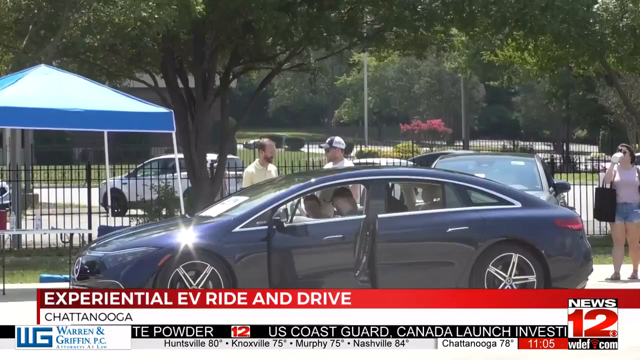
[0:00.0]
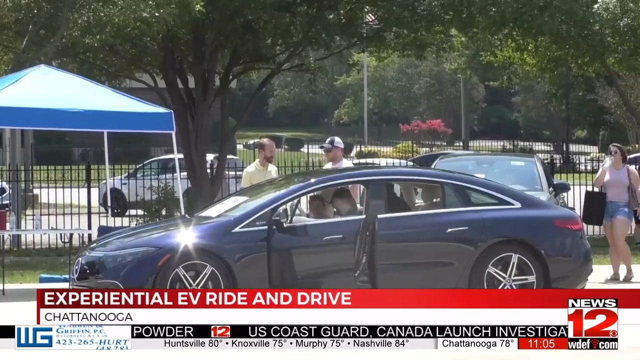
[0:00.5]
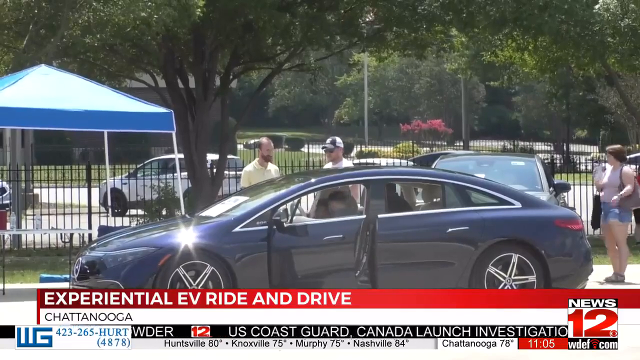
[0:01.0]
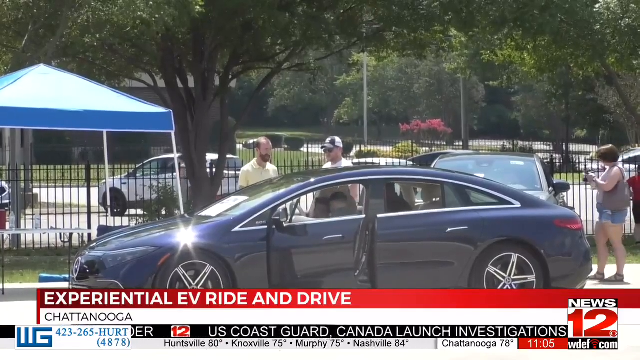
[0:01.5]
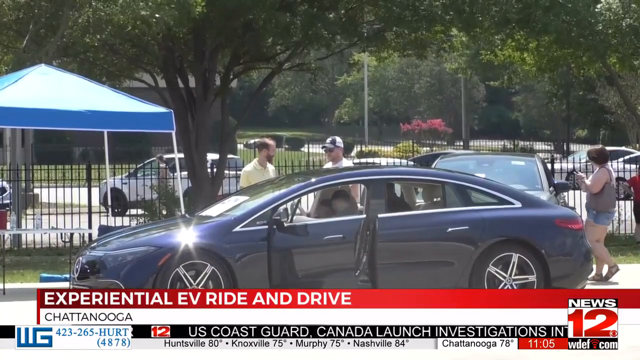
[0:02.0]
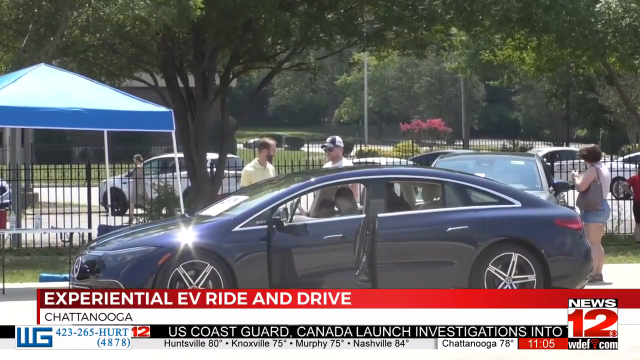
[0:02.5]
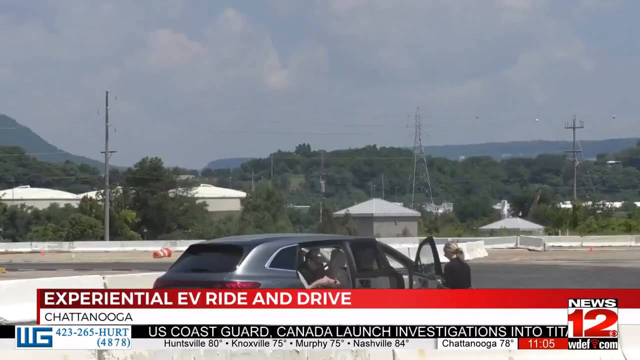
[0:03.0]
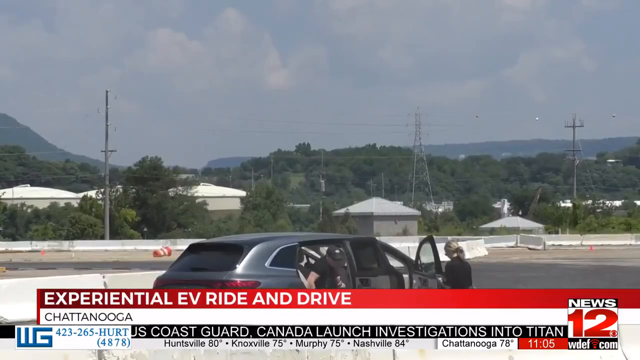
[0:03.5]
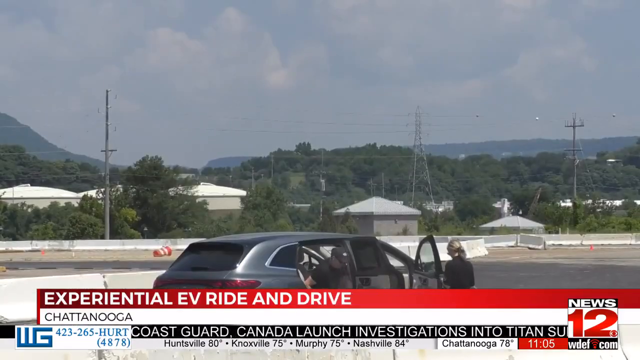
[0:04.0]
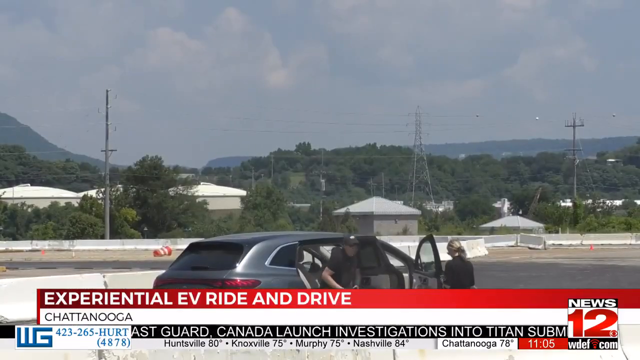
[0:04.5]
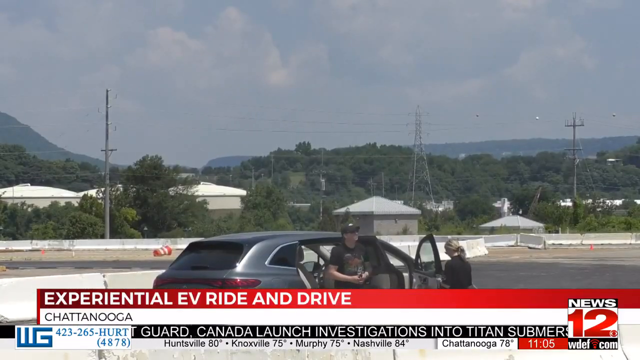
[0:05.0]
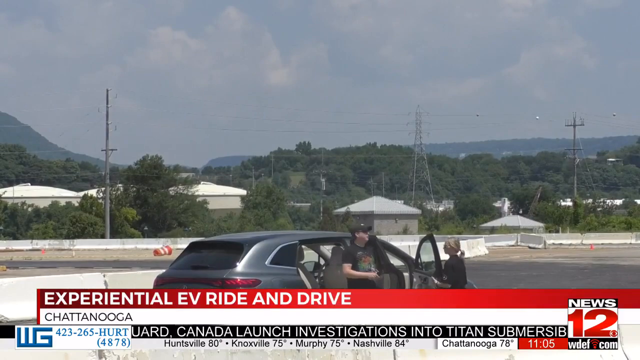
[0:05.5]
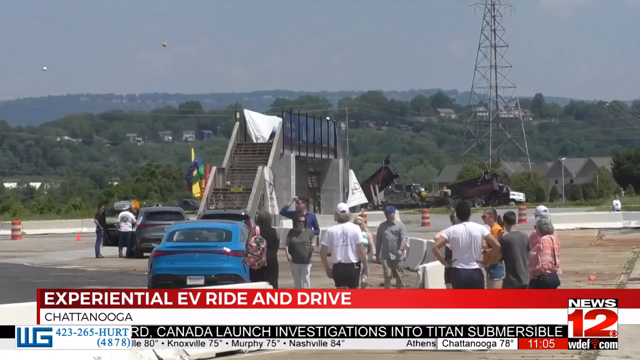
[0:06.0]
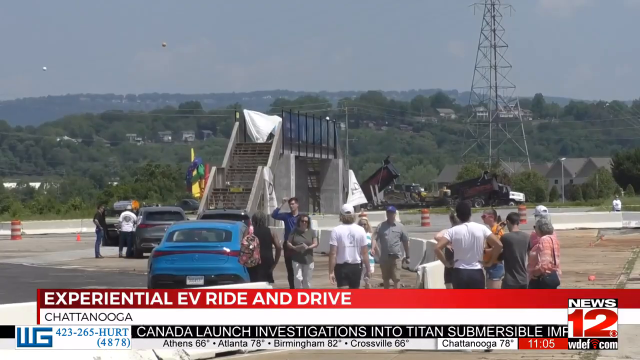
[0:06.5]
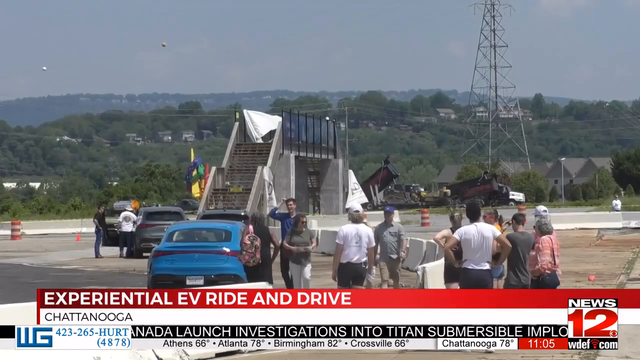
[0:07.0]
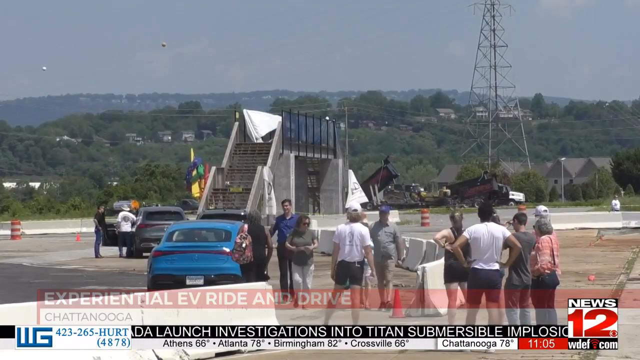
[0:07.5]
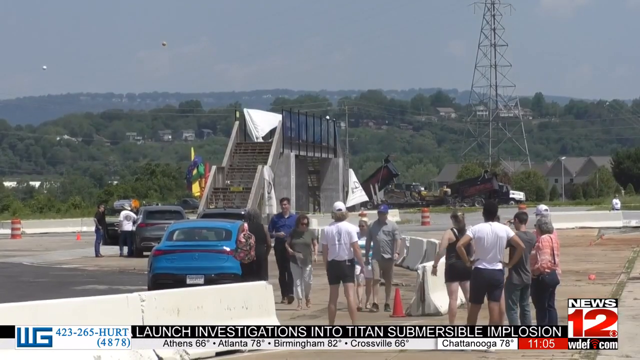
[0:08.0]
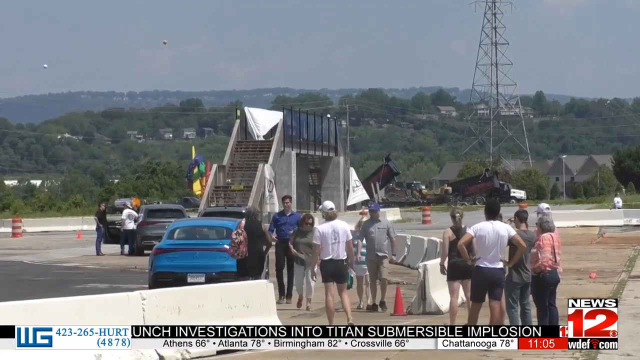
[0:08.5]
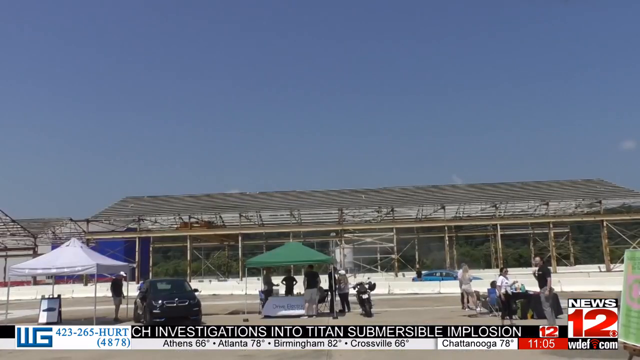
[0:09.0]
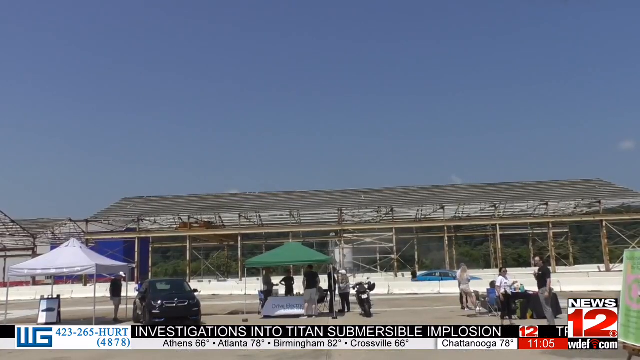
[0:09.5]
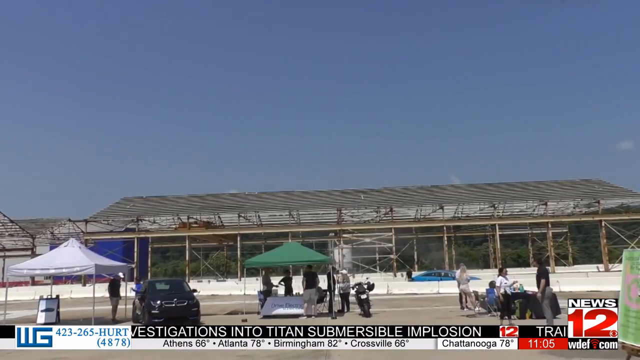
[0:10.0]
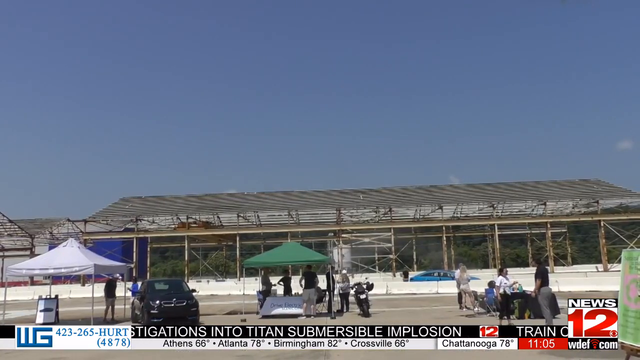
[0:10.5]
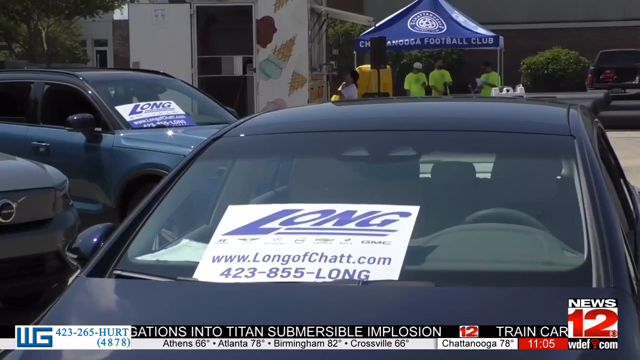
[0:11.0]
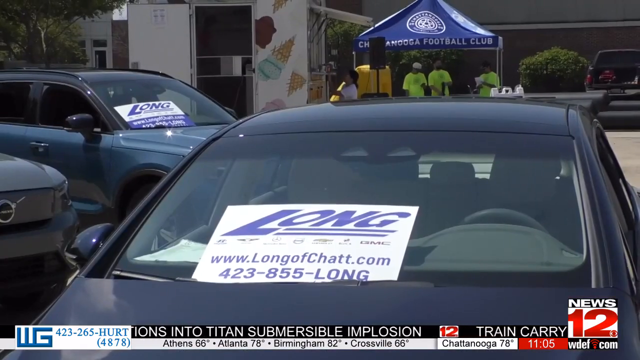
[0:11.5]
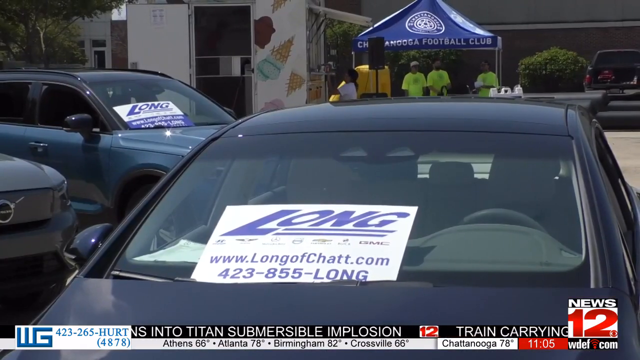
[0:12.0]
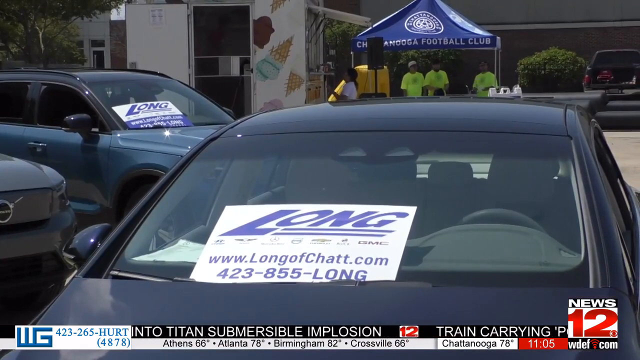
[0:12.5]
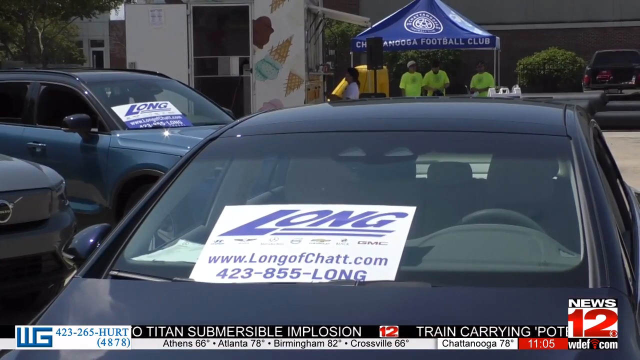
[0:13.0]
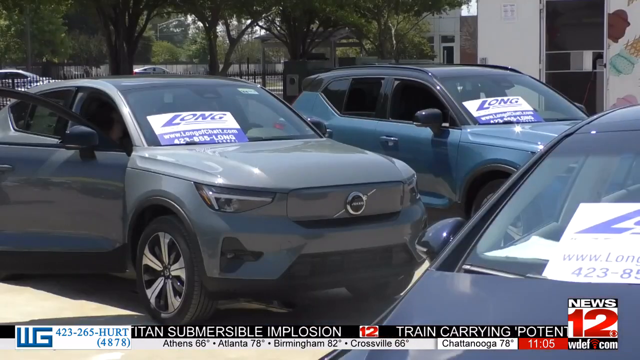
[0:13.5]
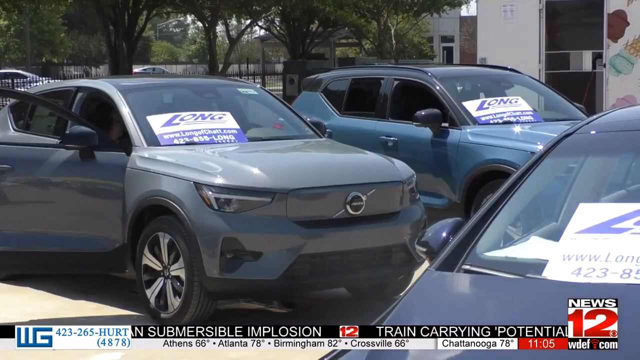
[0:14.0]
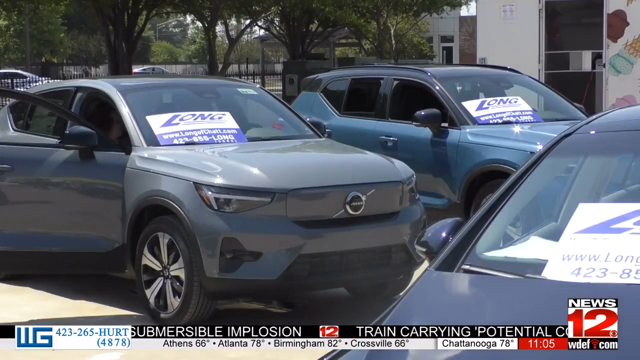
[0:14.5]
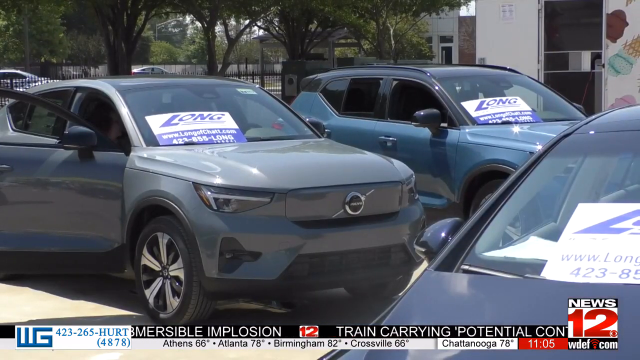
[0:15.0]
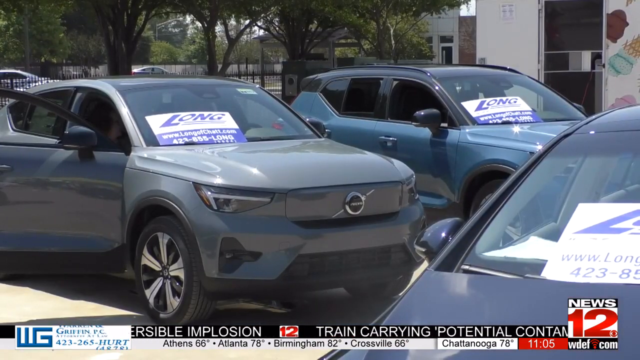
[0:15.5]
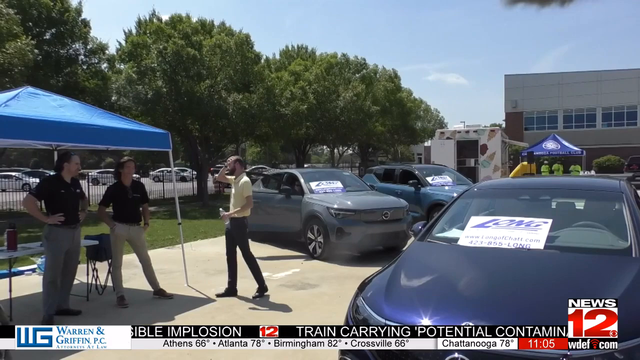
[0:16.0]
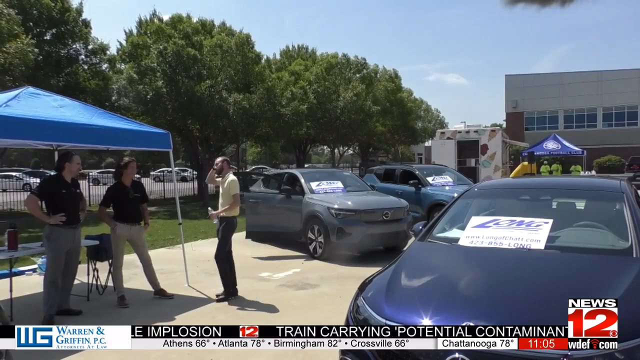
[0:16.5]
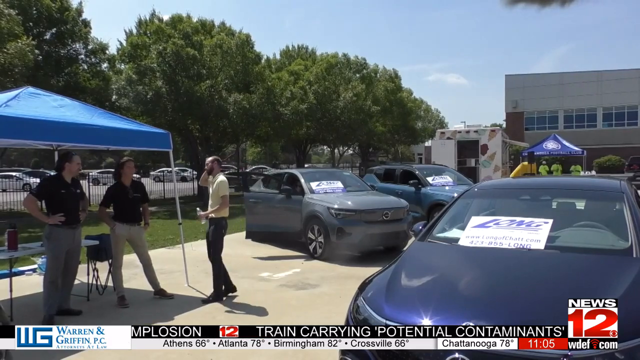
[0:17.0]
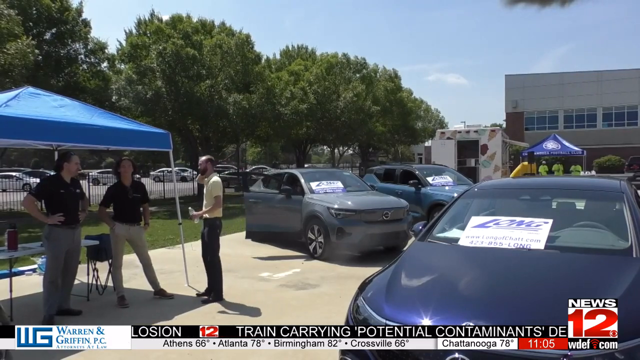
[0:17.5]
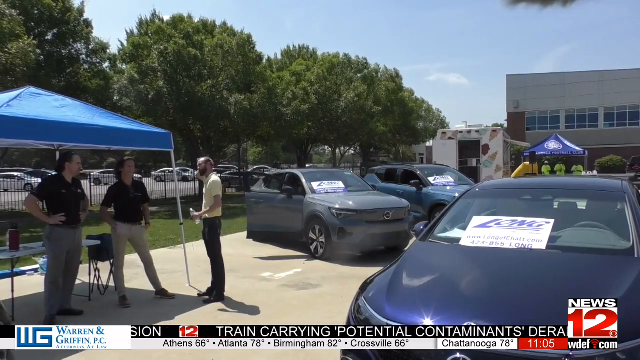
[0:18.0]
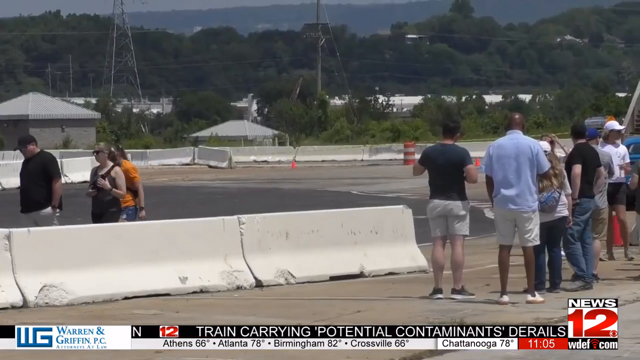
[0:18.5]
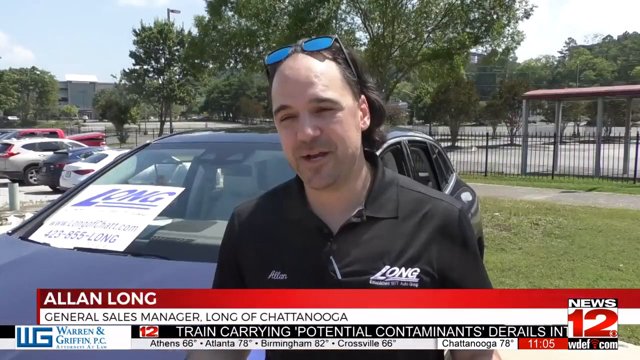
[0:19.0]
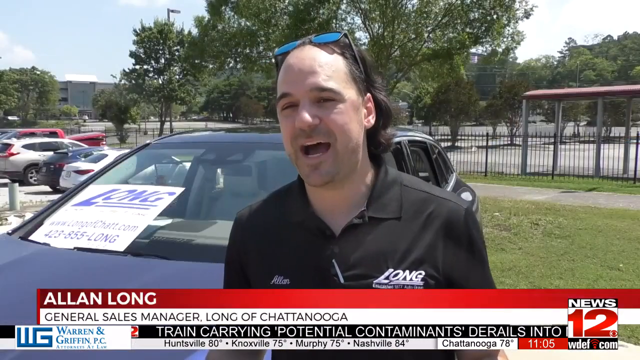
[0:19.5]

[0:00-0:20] A man appears to have something like a big cucumber coming out of his head. The event is an experimental EV ride and drive, featuring a car that does not look like a Tesla, and people are getting in and out of it. A car sale is also going on, with different dealers and different car makes in the parking lot, so all the cars can be seen. People are taking interest in the experimental EV ride and drive. One of the car dealers has a bottle of water and looks tired and hot, suggesting it may be a hot day.